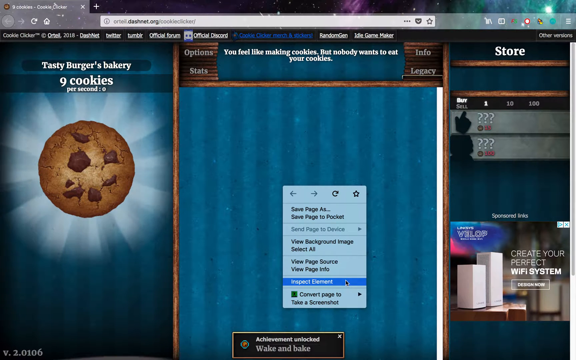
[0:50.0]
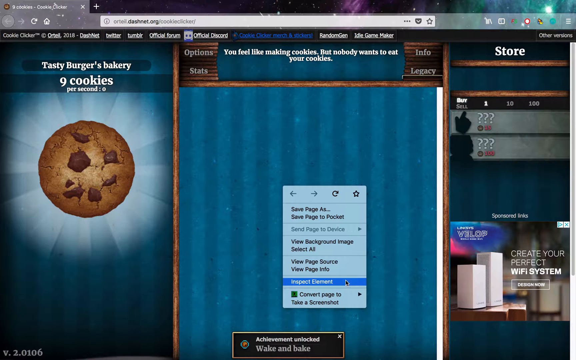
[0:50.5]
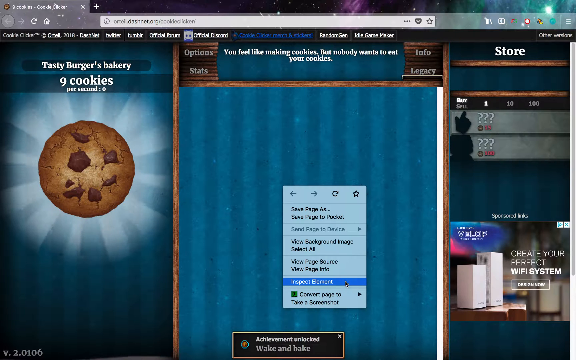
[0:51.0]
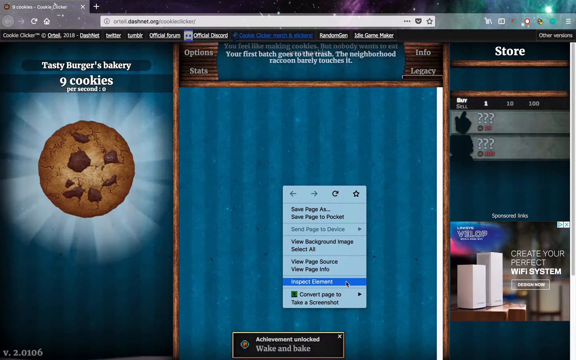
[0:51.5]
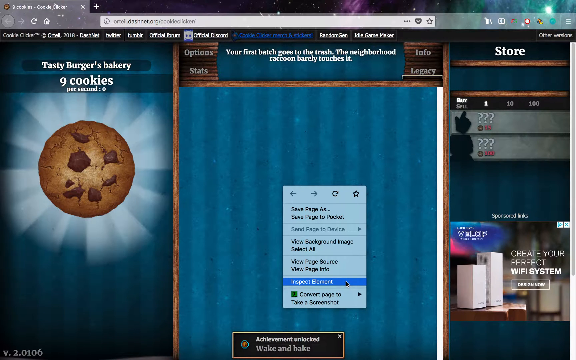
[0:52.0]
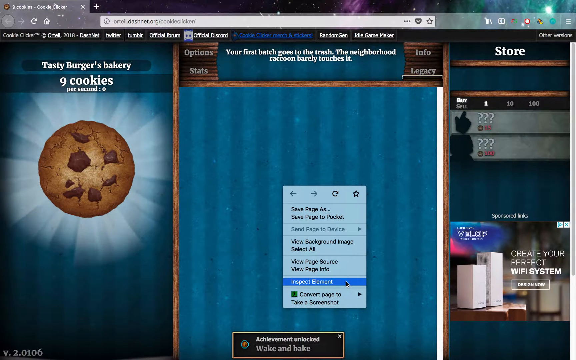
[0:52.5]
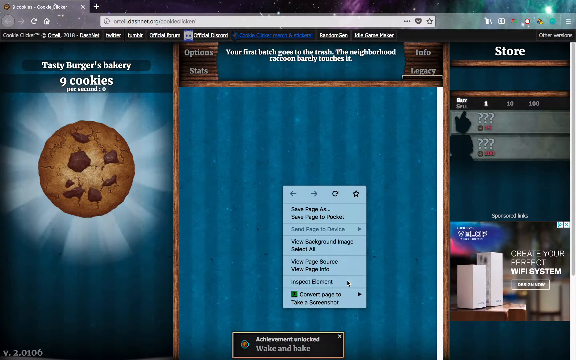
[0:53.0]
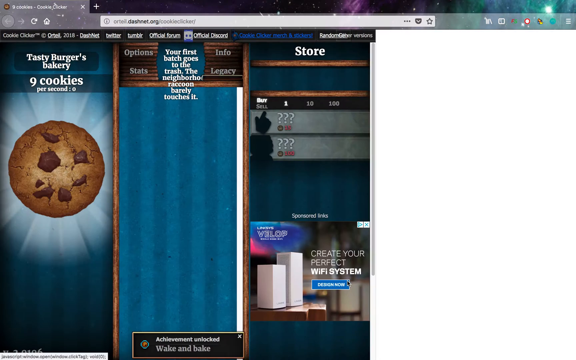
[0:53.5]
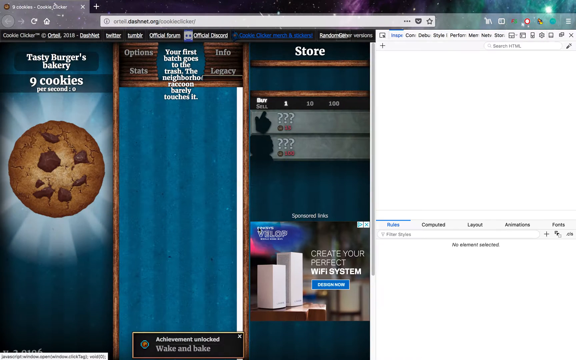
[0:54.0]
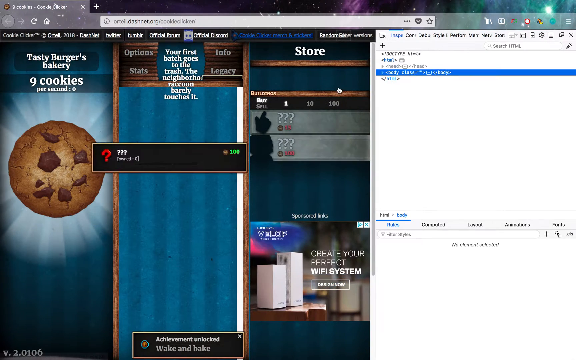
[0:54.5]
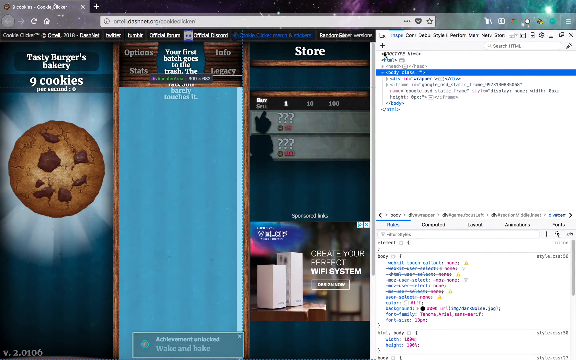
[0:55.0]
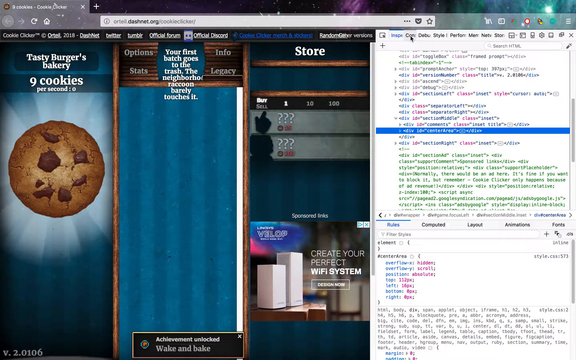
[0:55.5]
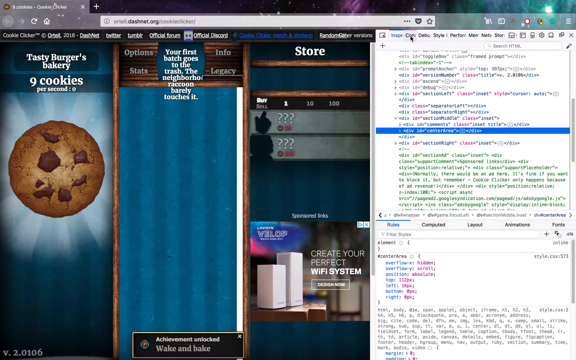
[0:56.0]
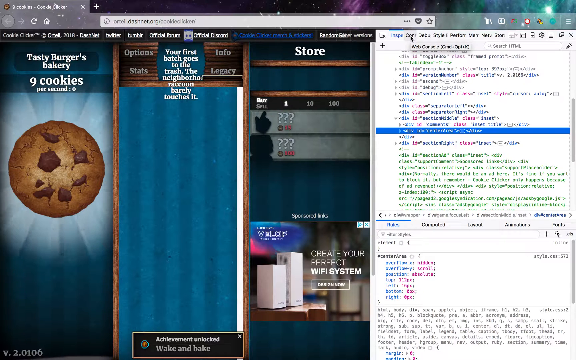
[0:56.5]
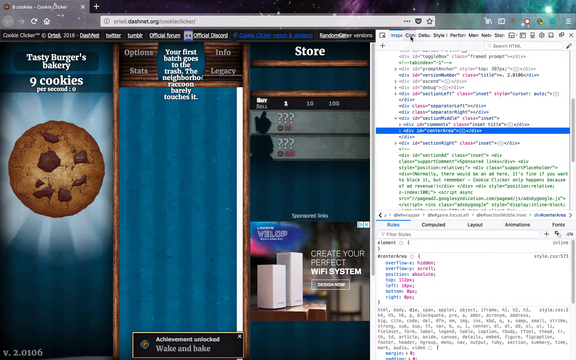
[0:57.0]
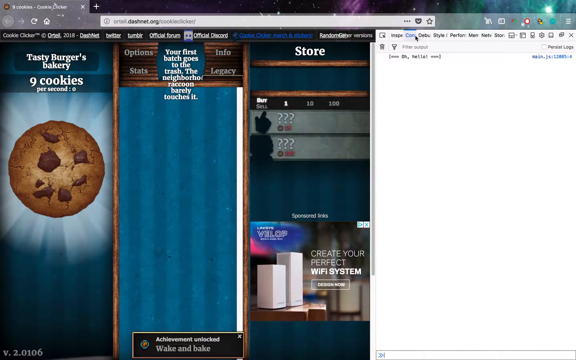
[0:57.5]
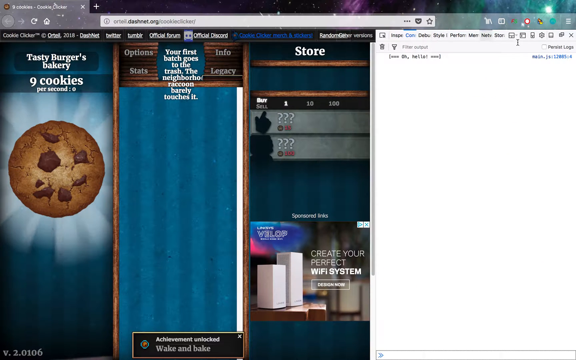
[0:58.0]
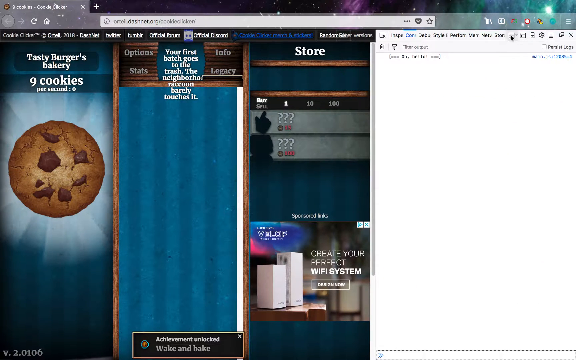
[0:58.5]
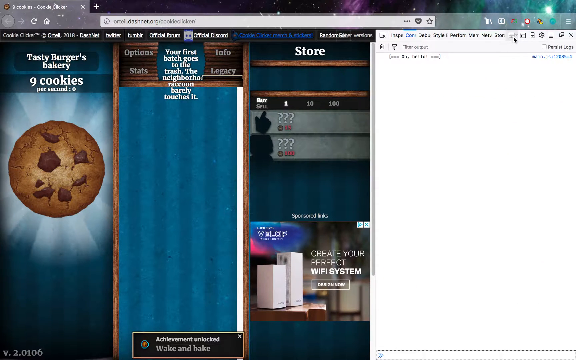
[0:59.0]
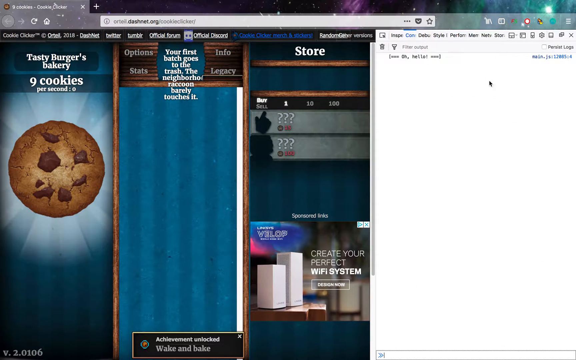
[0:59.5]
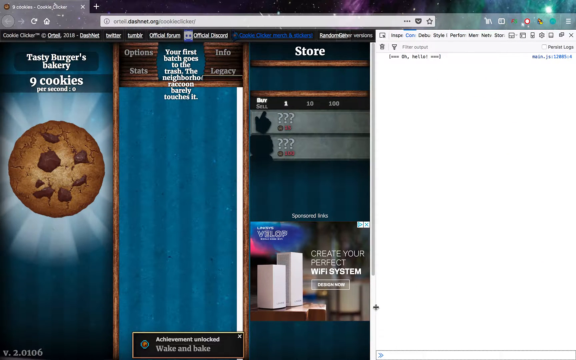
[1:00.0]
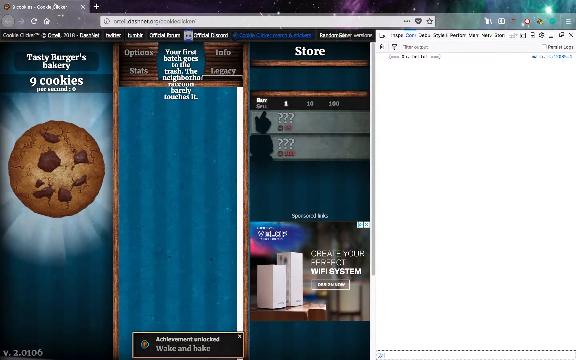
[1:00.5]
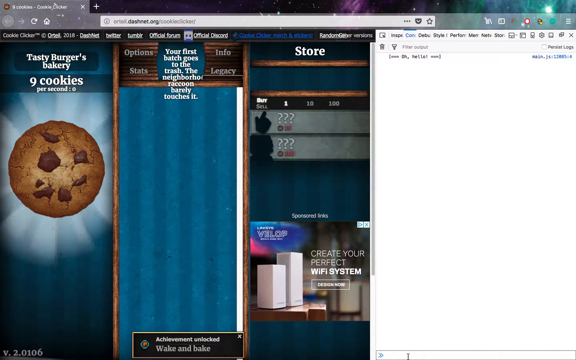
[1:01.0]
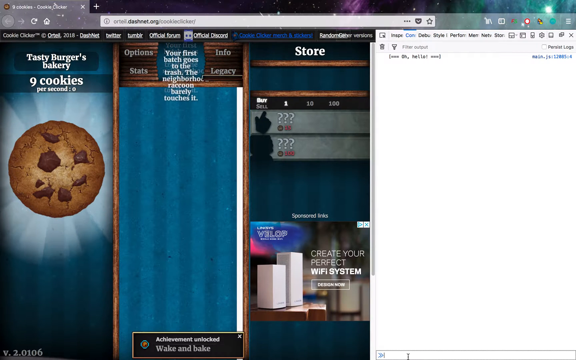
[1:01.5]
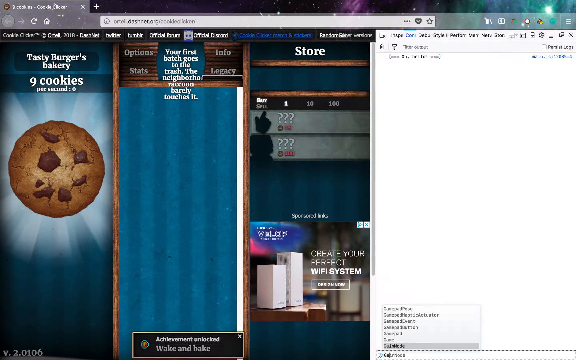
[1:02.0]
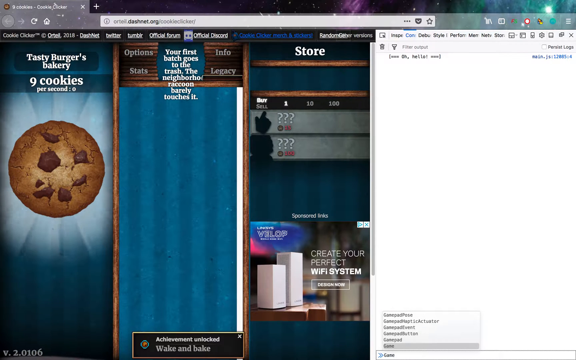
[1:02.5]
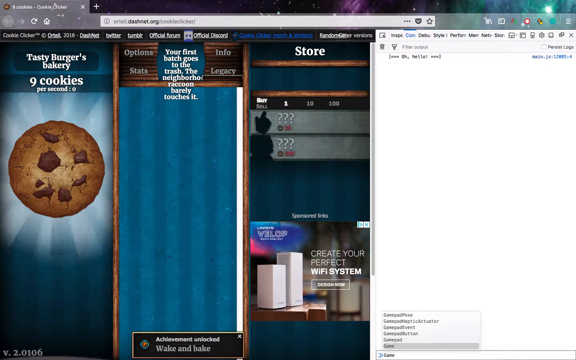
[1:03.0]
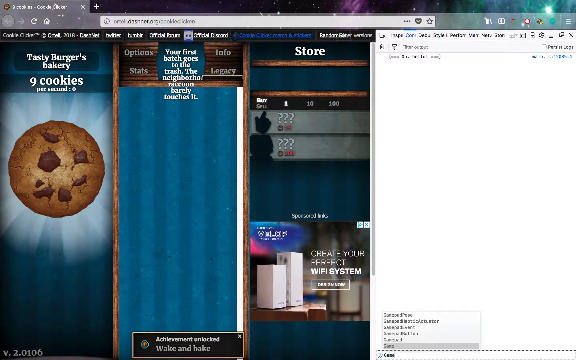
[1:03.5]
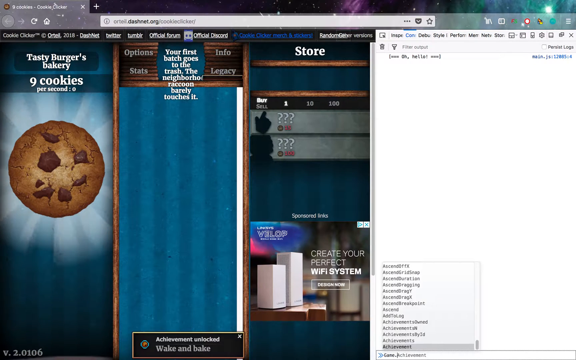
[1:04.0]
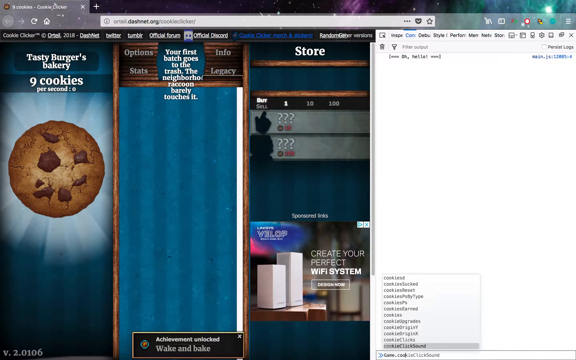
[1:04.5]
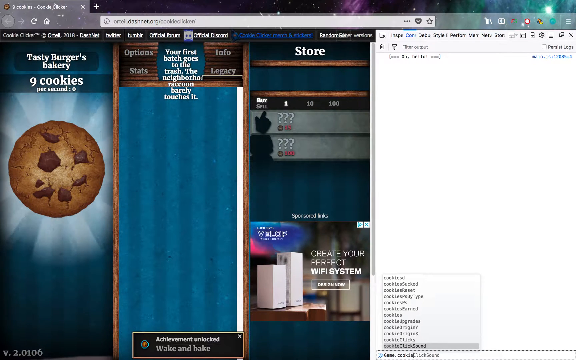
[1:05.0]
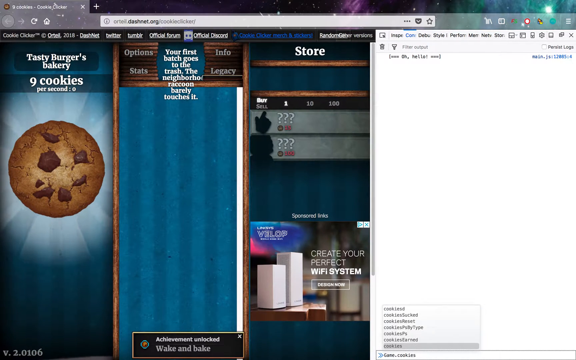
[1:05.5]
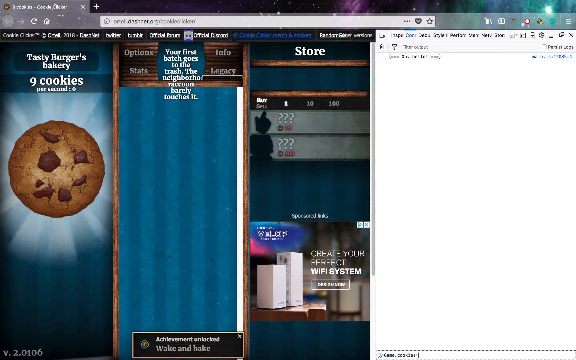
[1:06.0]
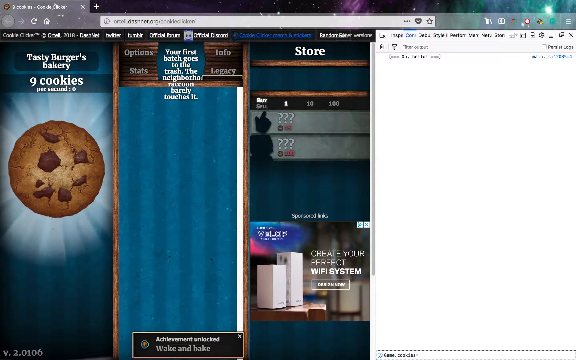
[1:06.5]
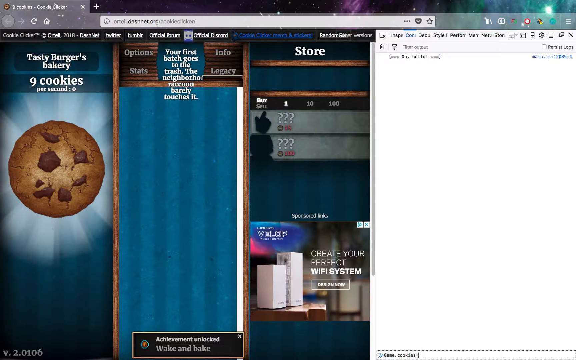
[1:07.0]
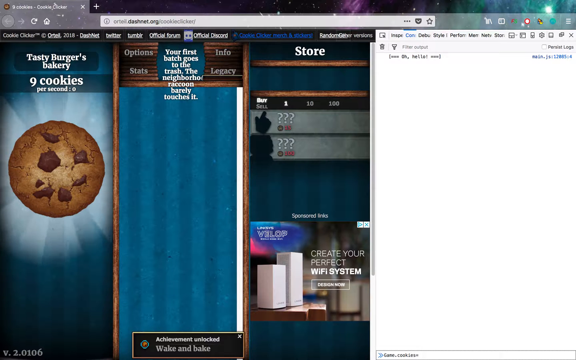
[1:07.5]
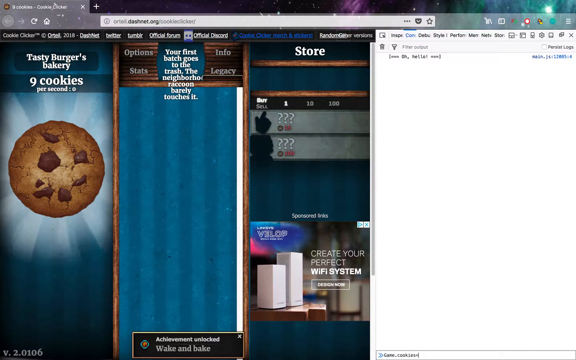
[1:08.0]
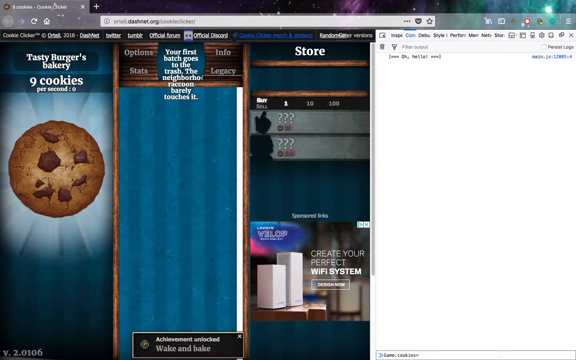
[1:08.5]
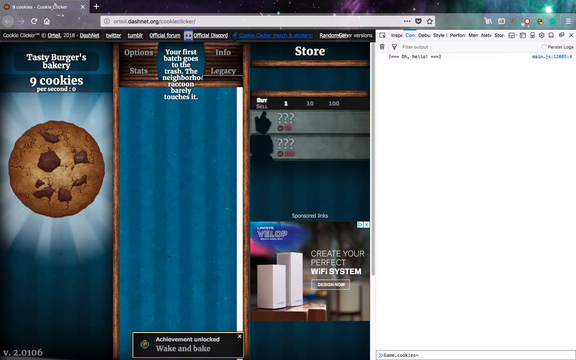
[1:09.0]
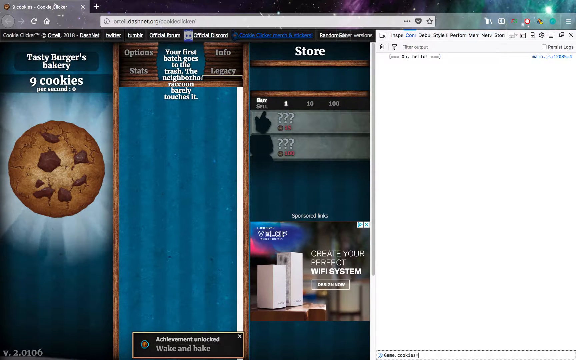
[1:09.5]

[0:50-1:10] The right-click menu appears and the cursor highlights the inspect element option. On the left side is a cookie that seems to have a shining background highlighting it, with "Tasty Burgers Bakery" above it. The count shows nine cookies, and it says "per second: 0". In the middle of the screen, a small message at the very top says "you feel like making cookies but nobody wants to eat your cookies." The cursor clicks the inspect element option, and the code populates. The cursor goes through options on the navigation tabs, clicks on things and starts a search, and he continues typing into the search as options pop up.